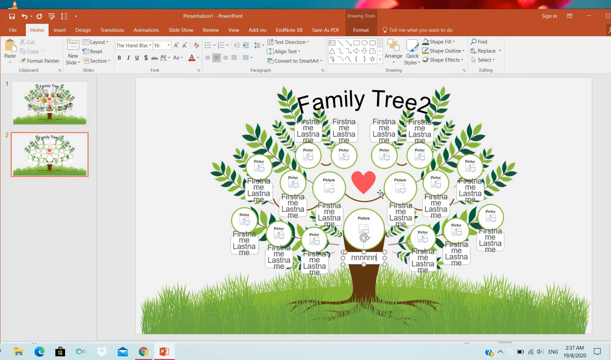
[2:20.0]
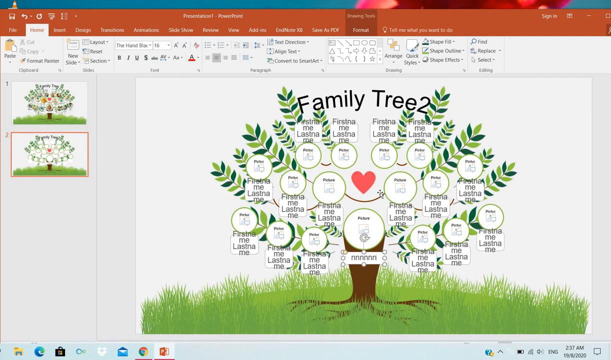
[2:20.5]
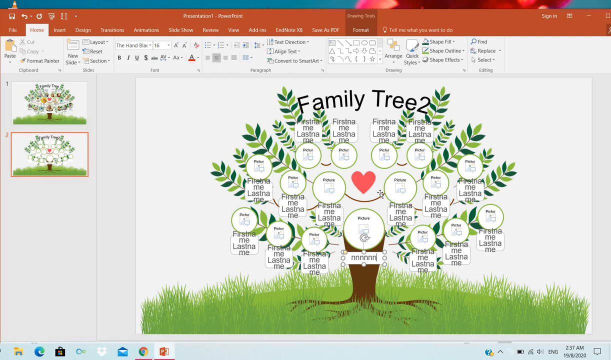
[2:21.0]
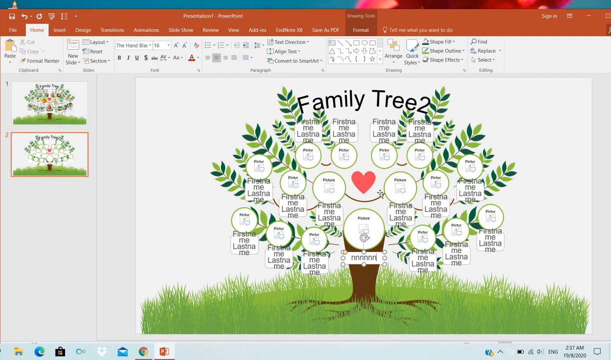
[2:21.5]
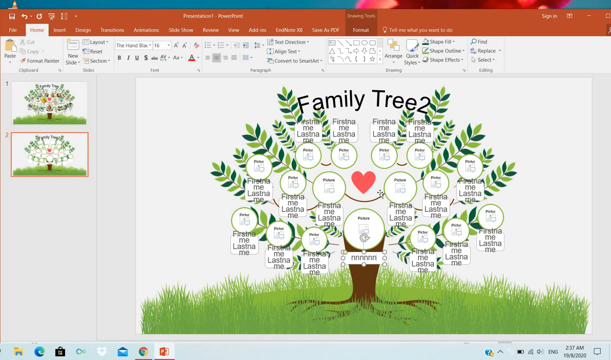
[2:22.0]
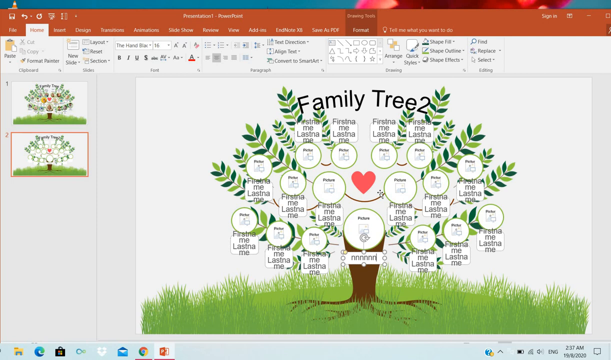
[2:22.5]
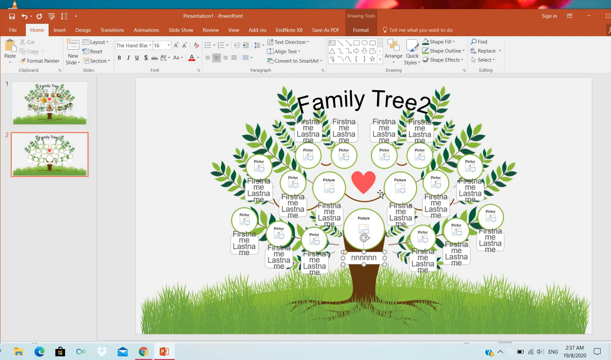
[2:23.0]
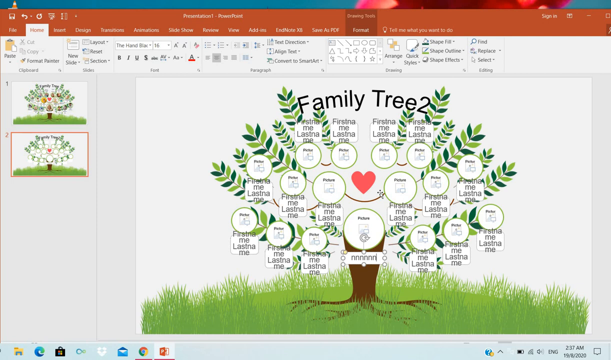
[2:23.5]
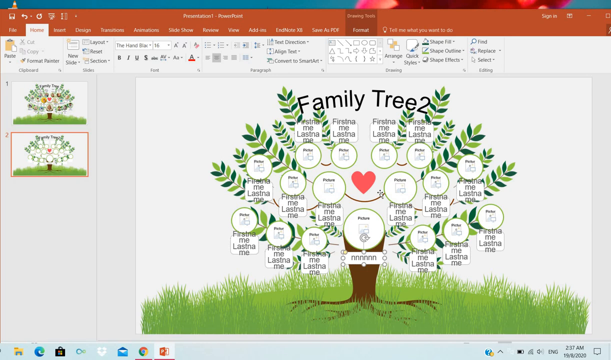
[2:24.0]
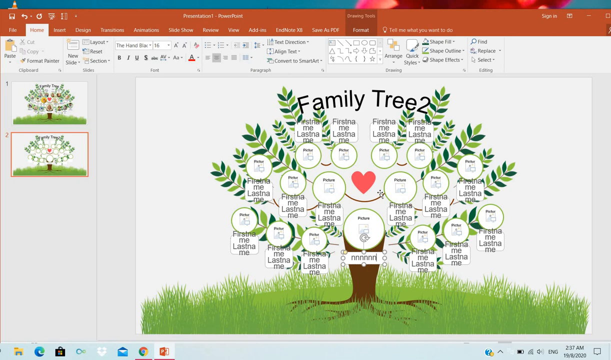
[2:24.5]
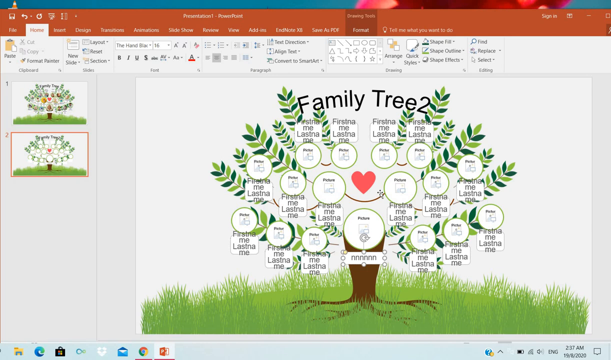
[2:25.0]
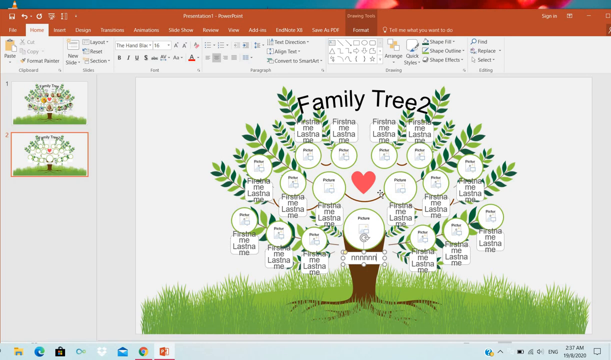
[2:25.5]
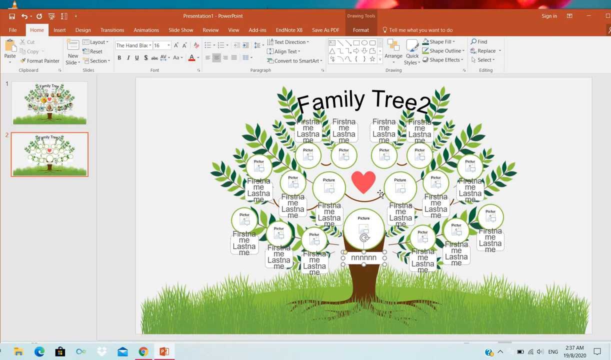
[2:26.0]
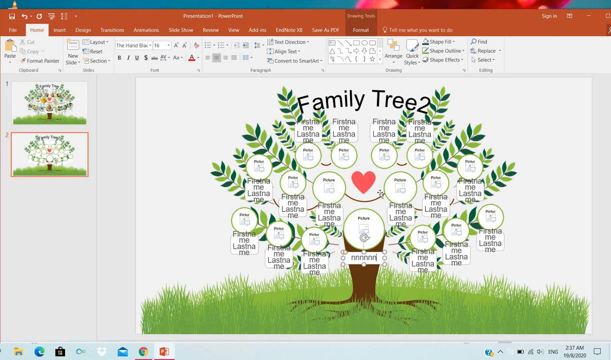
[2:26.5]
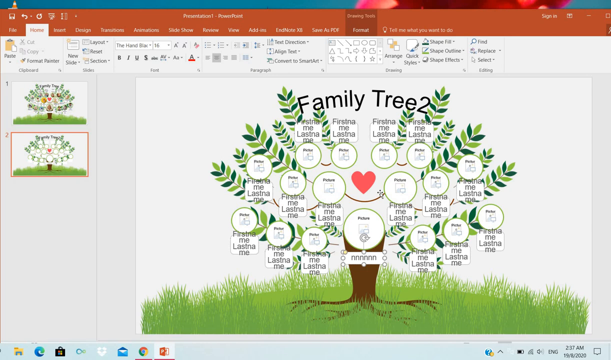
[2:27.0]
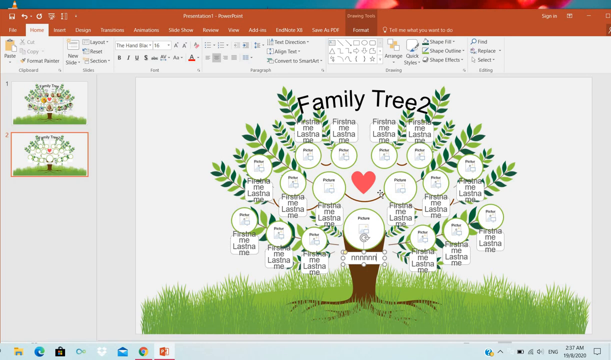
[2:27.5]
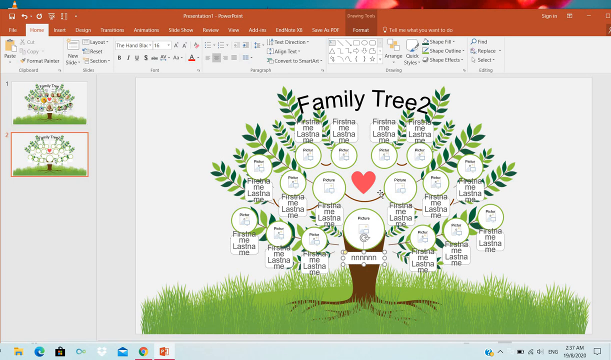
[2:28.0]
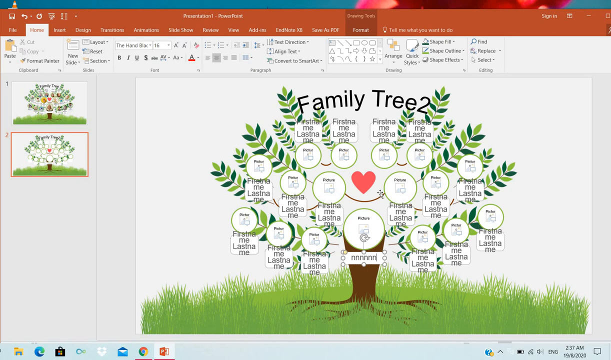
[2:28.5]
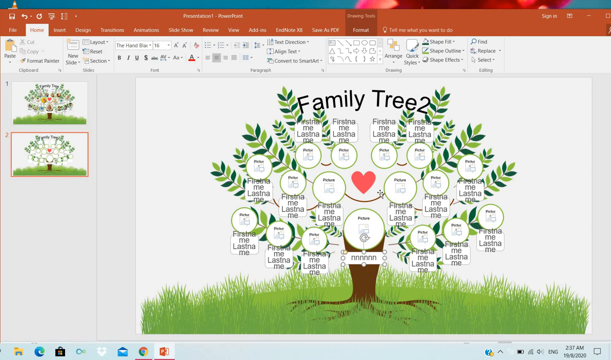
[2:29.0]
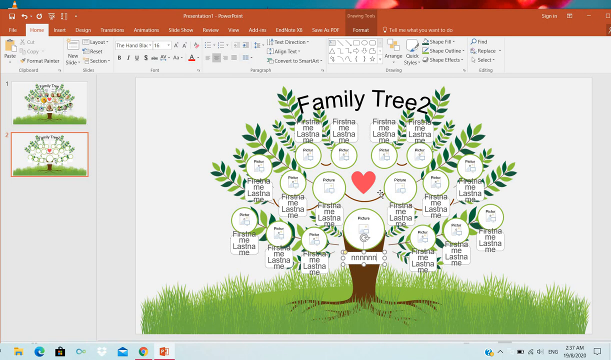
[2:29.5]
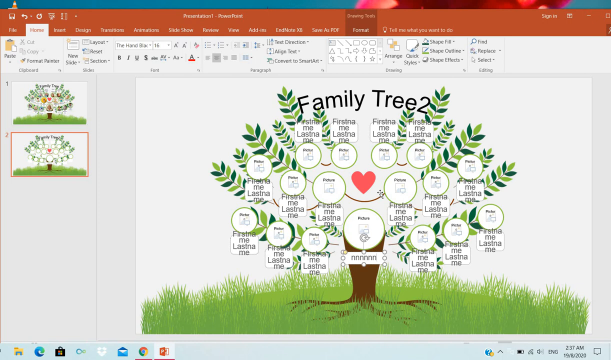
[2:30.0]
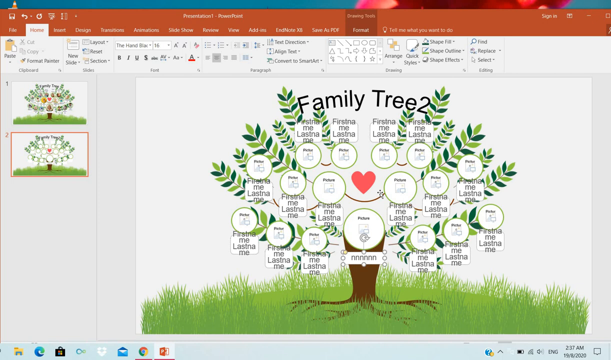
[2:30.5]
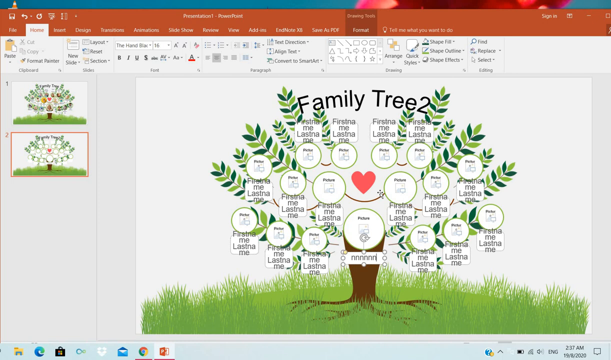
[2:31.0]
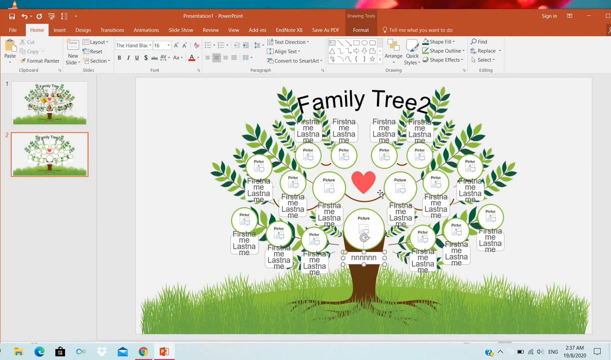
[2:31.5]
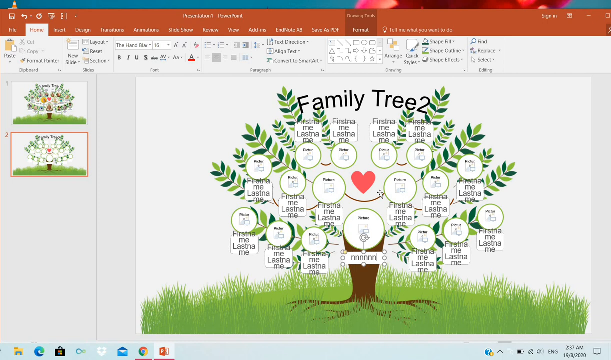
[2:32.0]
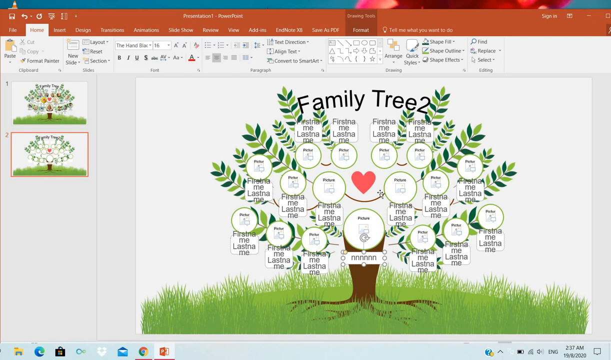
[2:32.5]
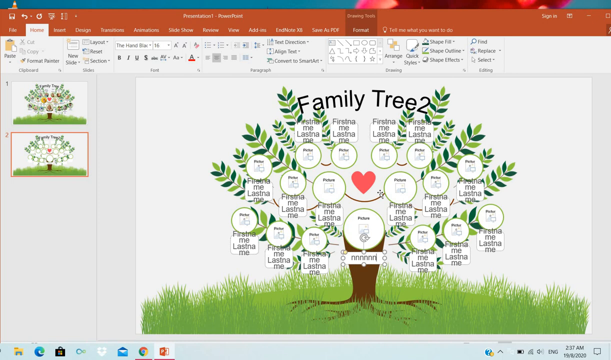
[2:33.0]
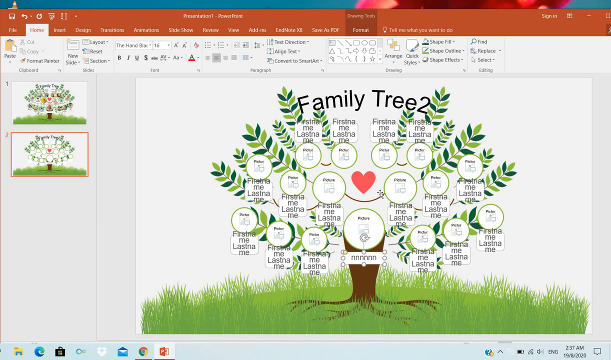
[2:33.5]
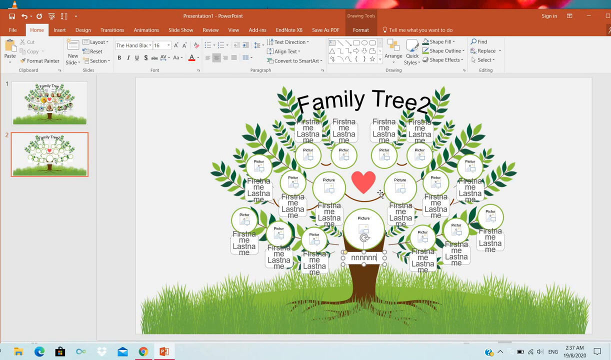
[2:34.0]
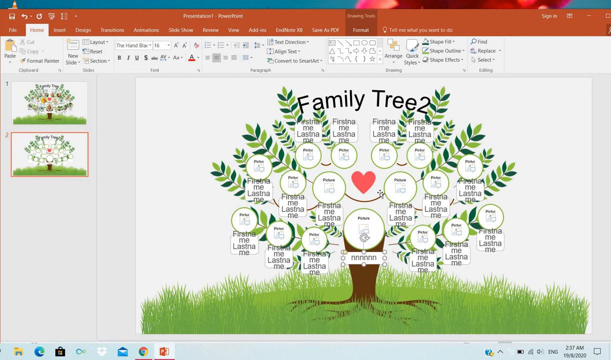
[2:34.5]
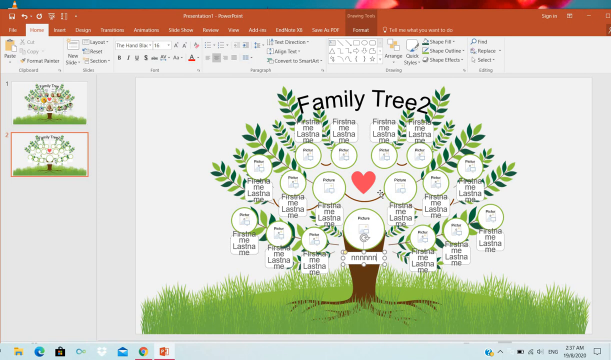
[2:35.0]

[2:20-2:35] "Family tree 2" is still on the screen and nothing has changed. The text cursor blinks at the end of the row of n's typed below the largest circle, and nothing else is being done. A red heart is in the middle of the tree formation, in an open space above a rounded, bent brown line that connects two of the larger circles; the brown line is just above the largest circle, which possibly holds the main or original person the family is traced from. All the circles are outlined in the same lighter green. To the left and right of the heart are two circles of the same size, the second largest in the family tree, and all the other circles branching from them are the same size as each other.